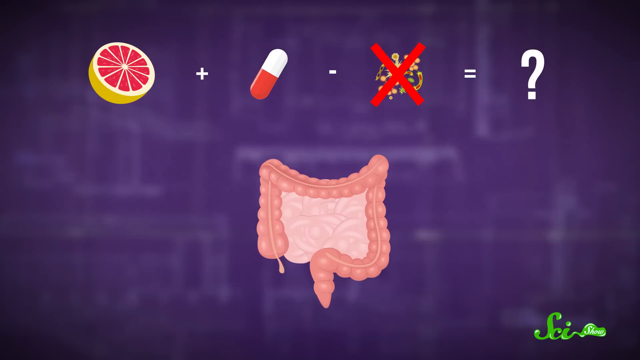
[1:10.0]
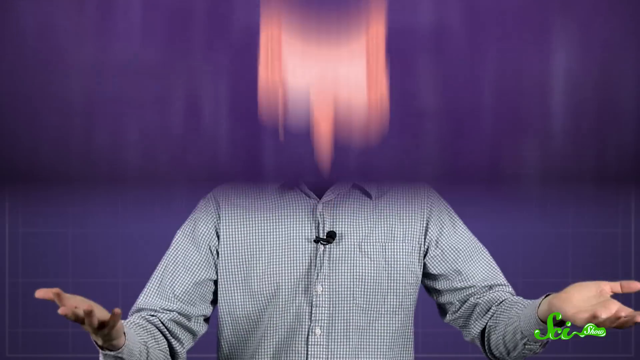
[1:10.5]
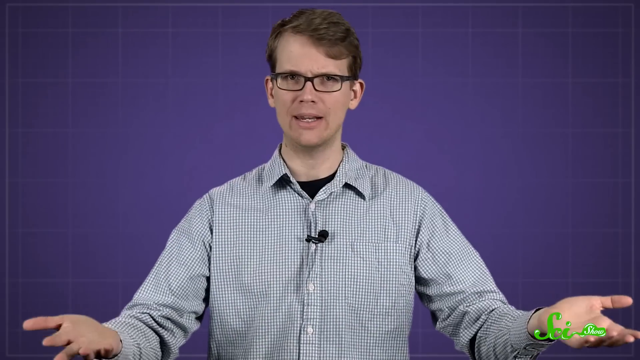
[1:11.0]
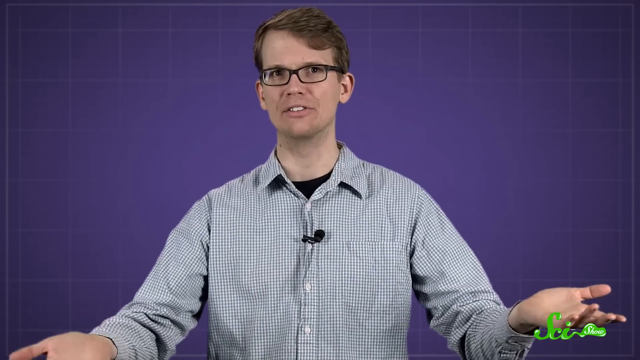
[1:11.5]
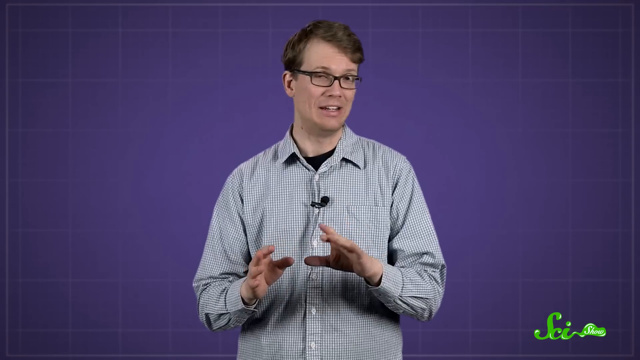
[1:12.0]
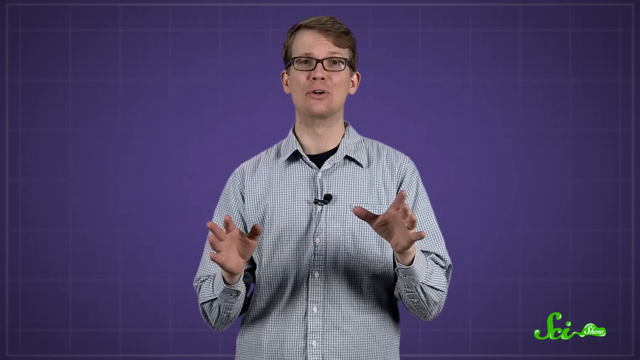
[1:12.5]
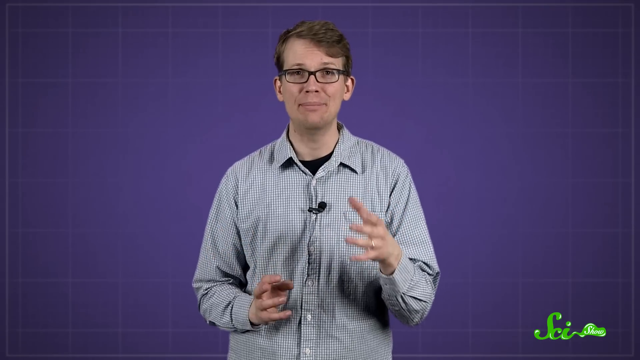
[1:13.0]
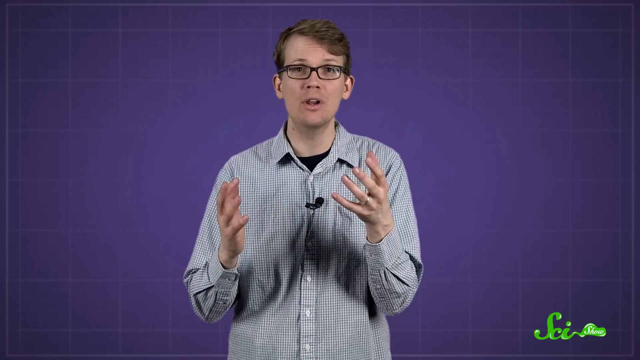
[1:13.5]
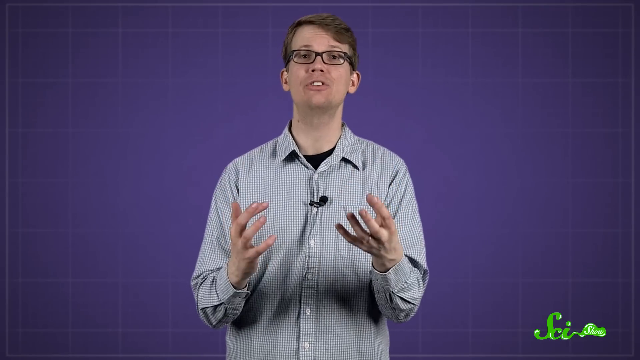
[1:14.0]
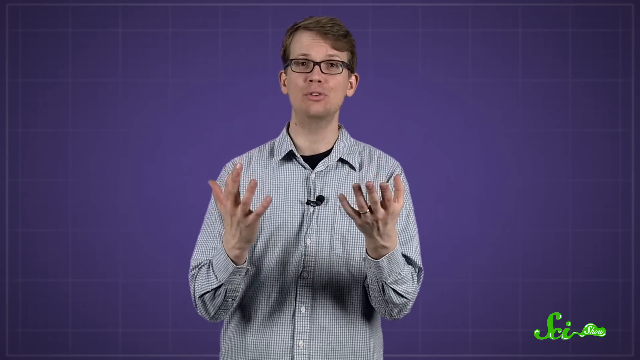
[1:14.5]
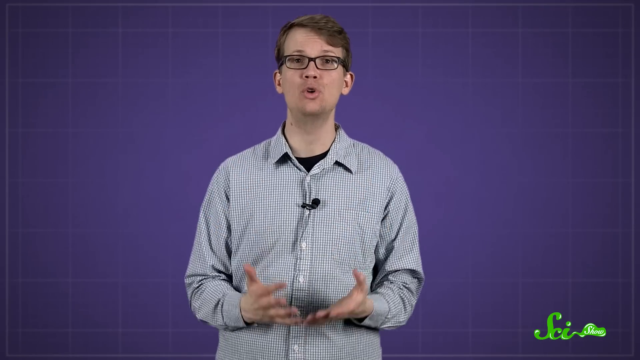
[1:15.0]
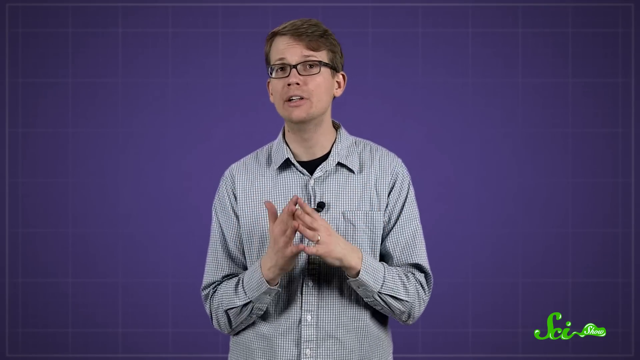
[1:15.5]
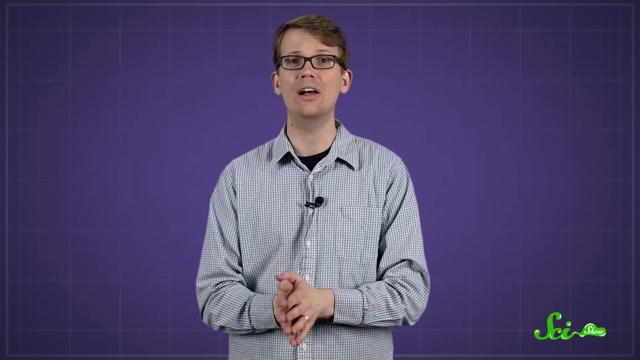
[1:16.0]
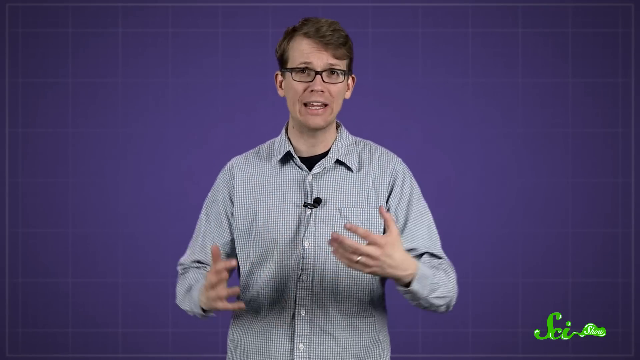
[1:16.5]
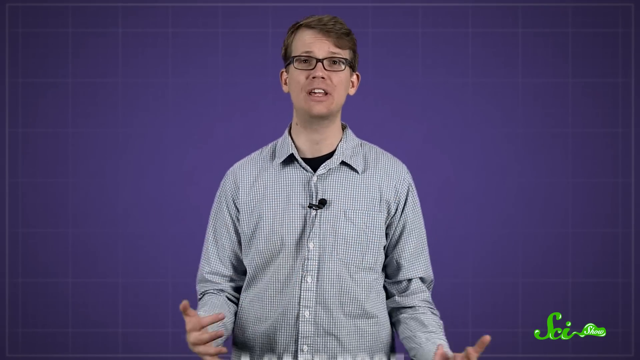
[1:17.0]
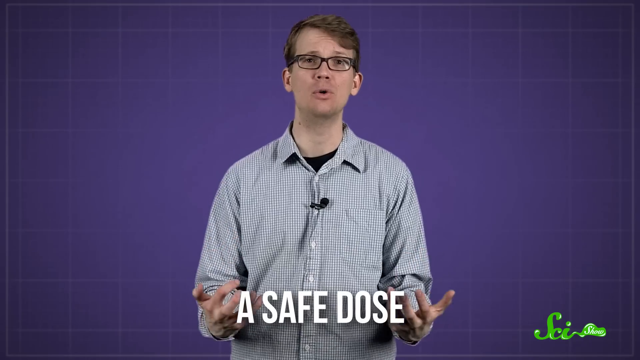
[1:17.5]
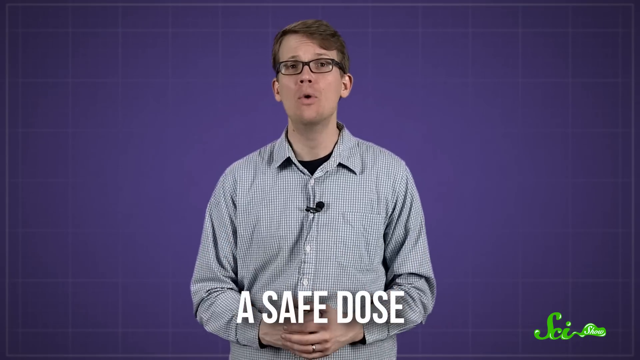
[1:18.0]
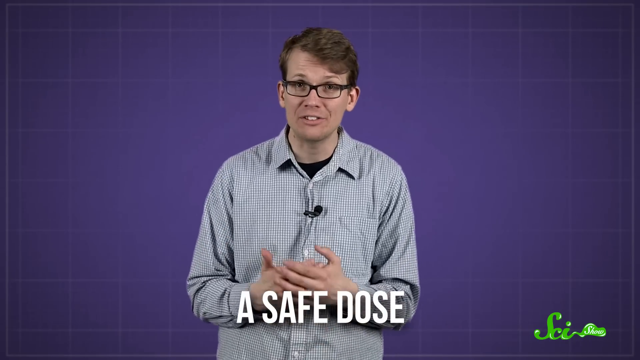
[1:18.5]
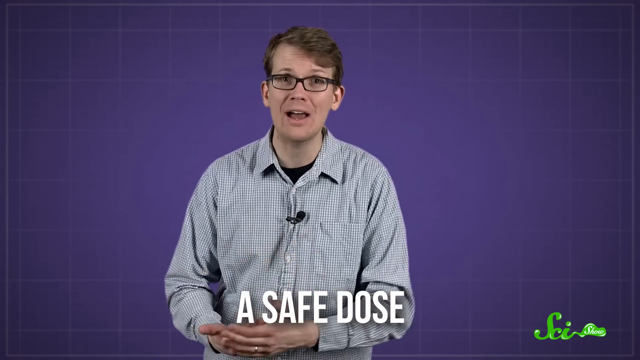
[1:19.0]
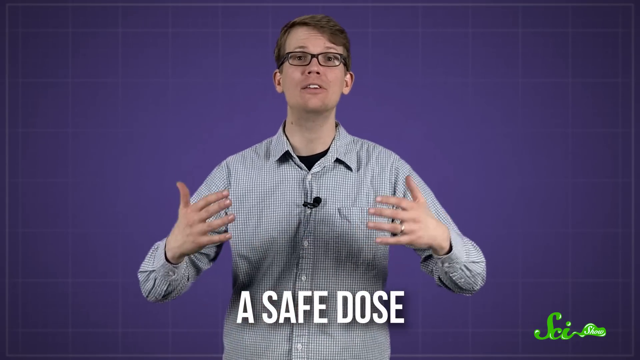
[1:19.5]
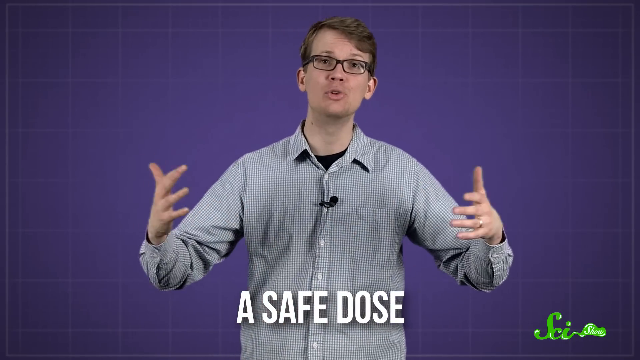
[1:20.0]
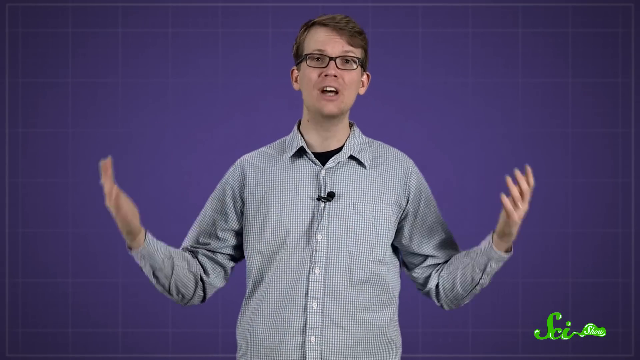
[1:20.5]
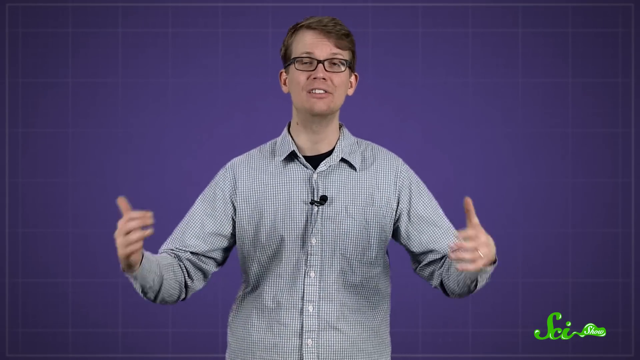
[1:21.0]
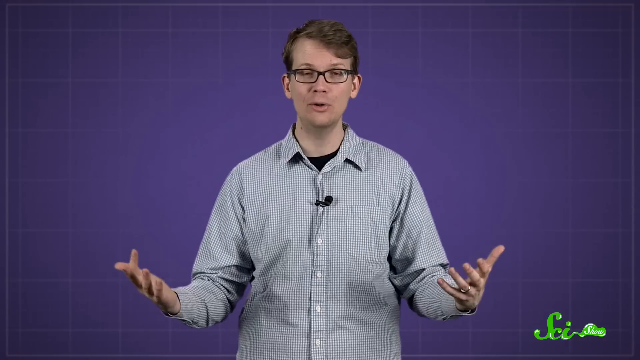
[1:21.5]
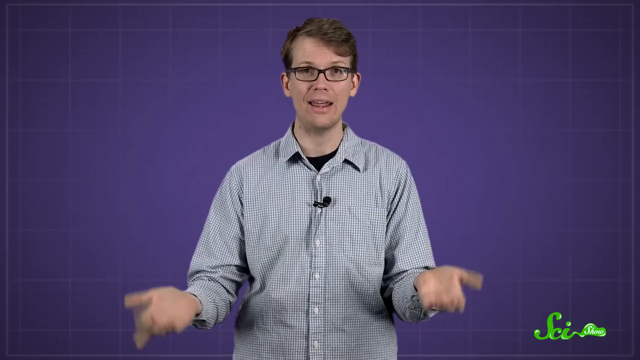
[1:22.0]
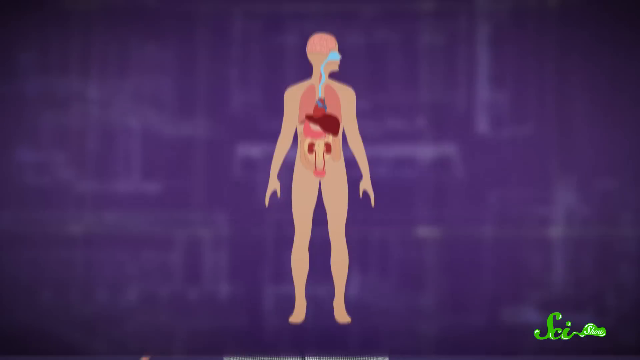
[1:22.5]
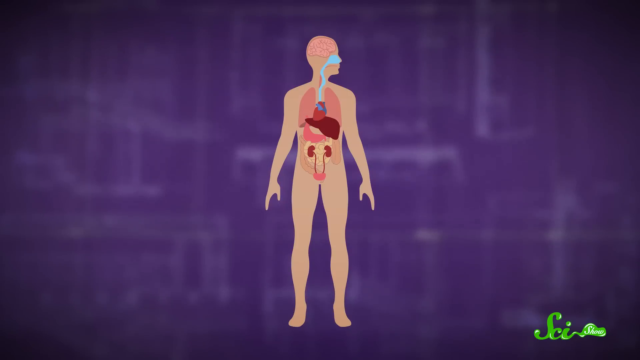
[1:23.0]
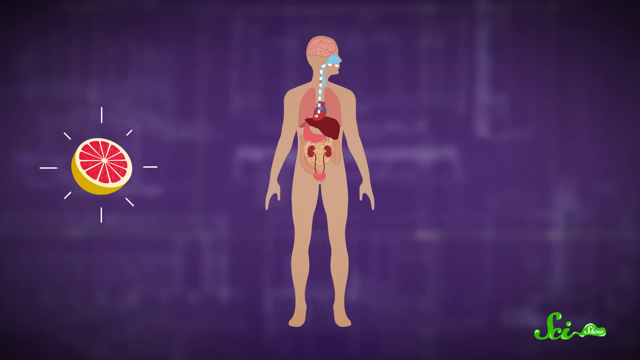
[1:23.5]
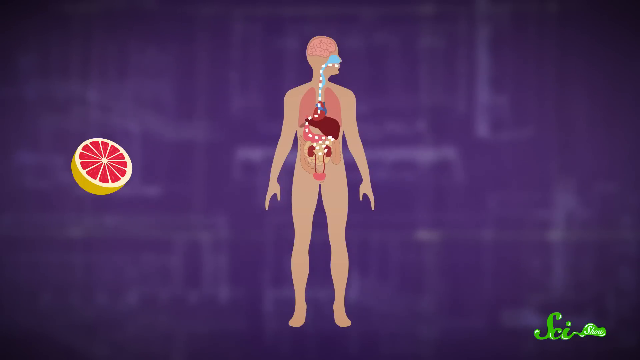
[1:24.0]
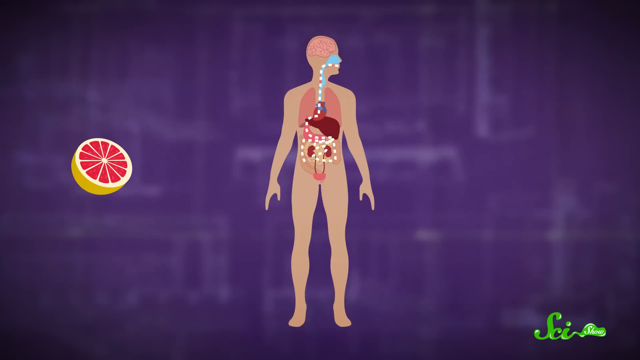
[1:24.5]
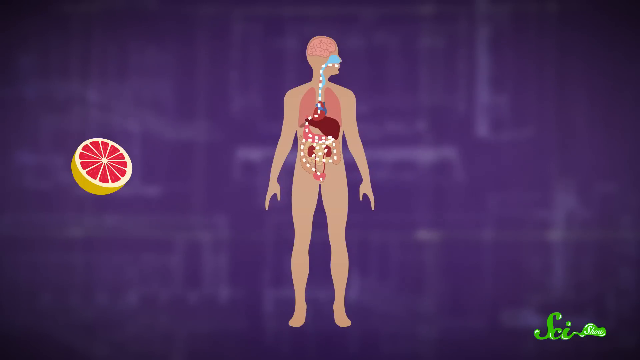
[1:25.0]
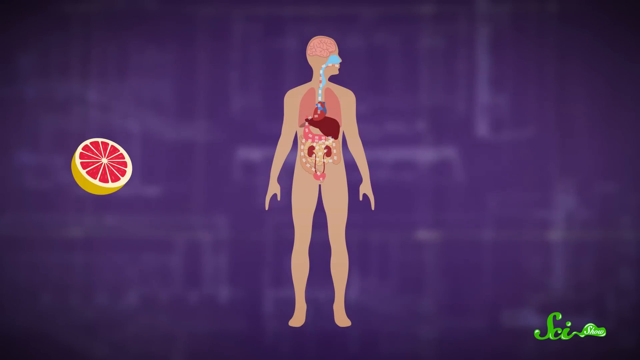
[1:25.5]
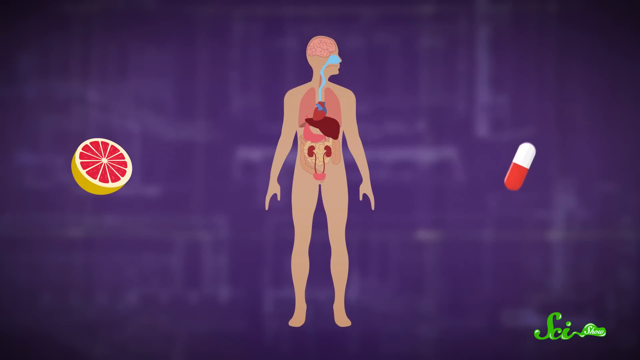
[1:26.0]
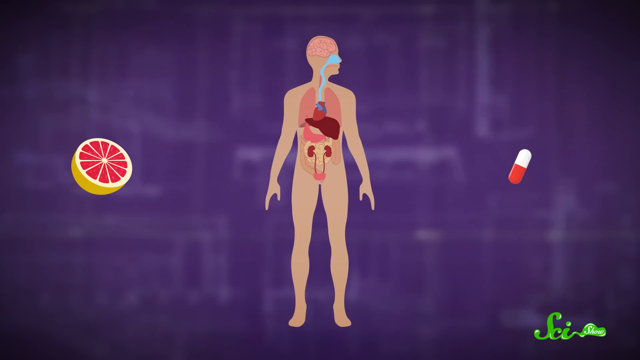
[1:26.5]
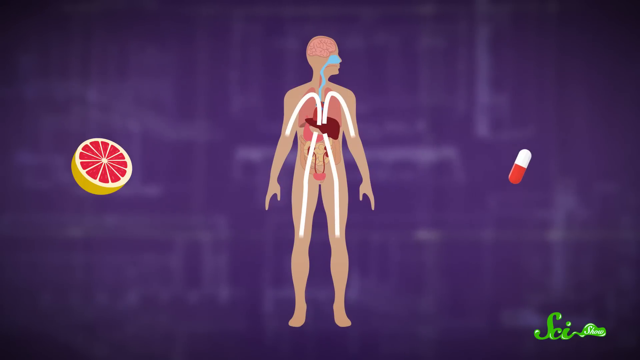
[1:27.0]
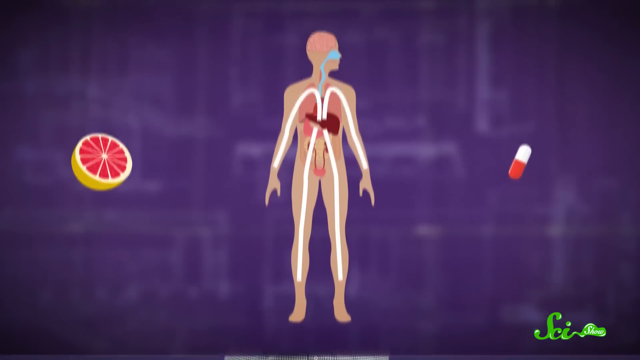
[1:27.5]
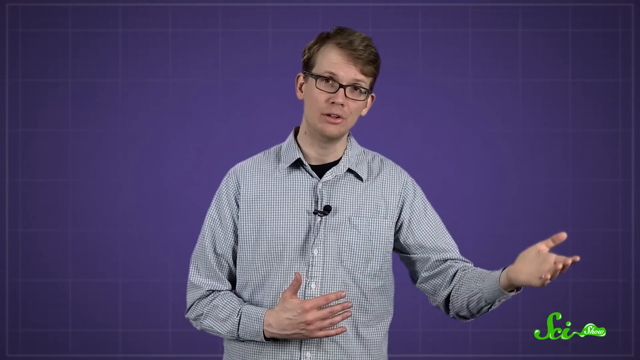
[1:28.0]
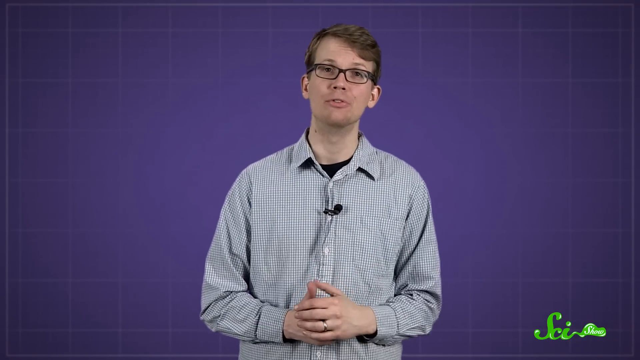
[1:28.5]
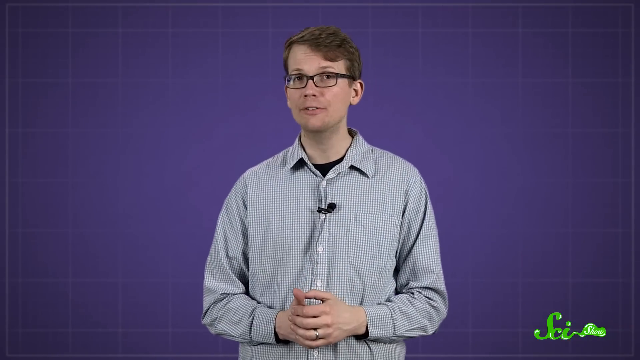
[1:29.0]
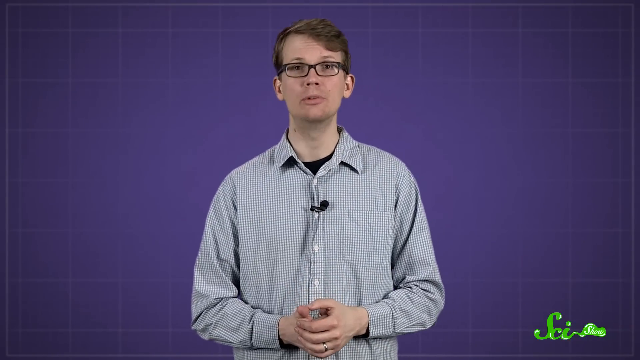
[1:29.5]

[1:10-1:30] A graphic shows the grapefruit plus a pill, an oval capsule with a white top half and a red bottom half, then "minus the enzyme" with a big red X, "equals", and a question mark. The video returns to the man, who talks while raising his hands in front of him. The text "a safe dose" appears as his hands move up and down. A grapefruit appears, then a cartoon-type drawing of a human body with the brain visible, and a diagram of white dotted lines running down to the intestines showing the path. The capsule appears again, representing the medicine. The video returns to the man talking with his hands moving.